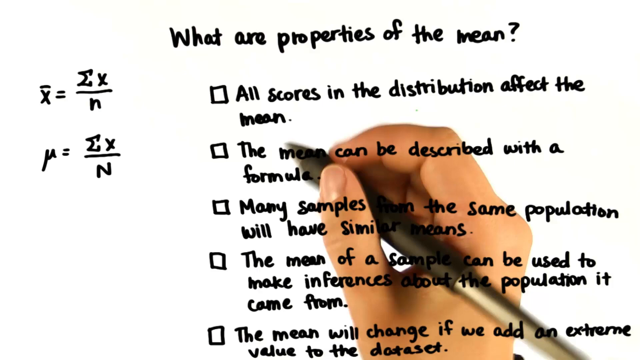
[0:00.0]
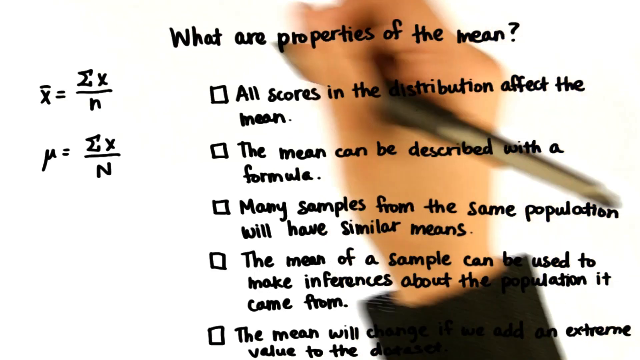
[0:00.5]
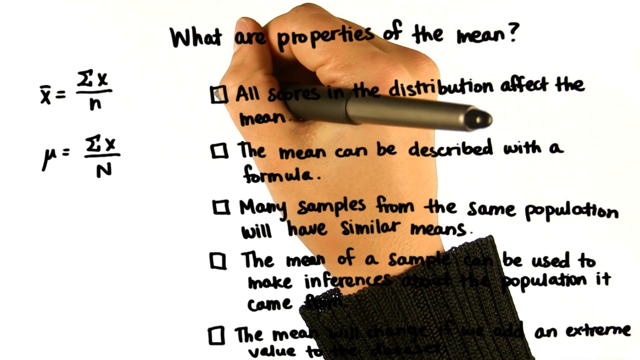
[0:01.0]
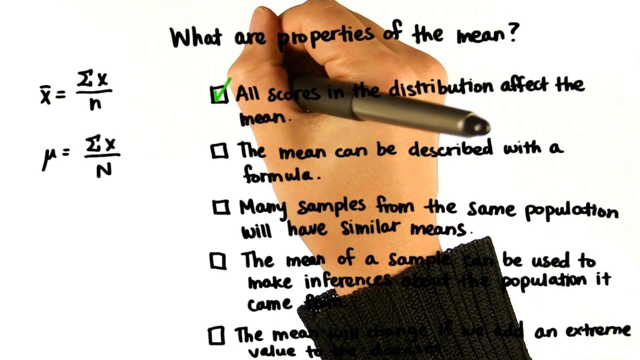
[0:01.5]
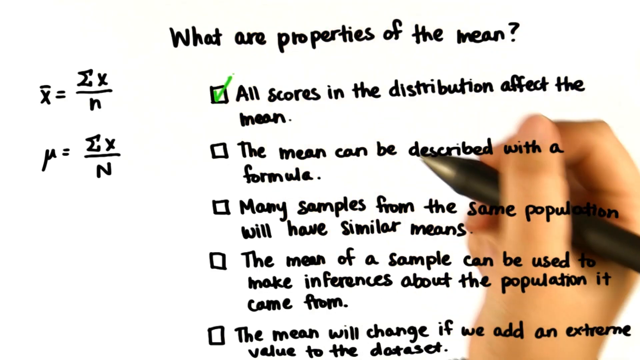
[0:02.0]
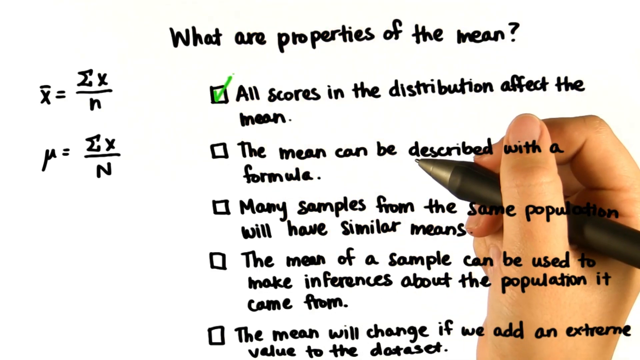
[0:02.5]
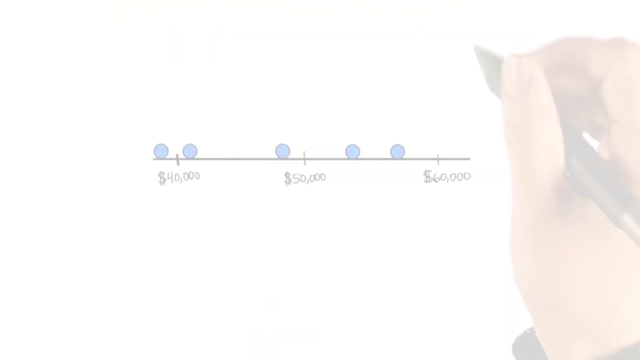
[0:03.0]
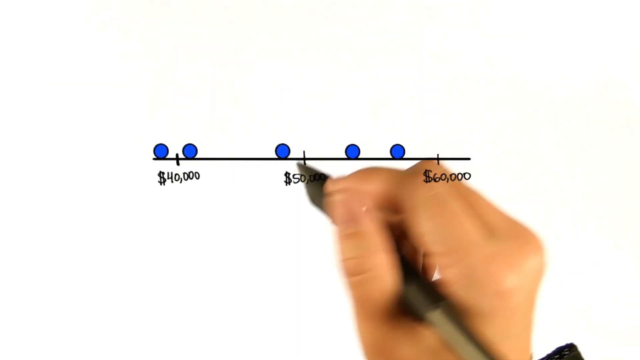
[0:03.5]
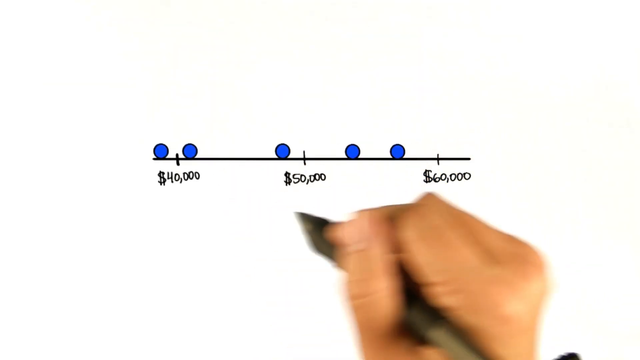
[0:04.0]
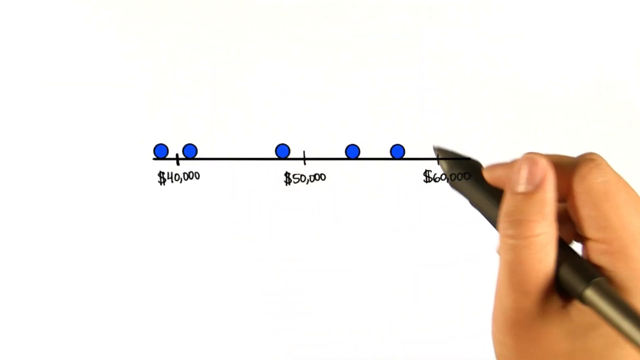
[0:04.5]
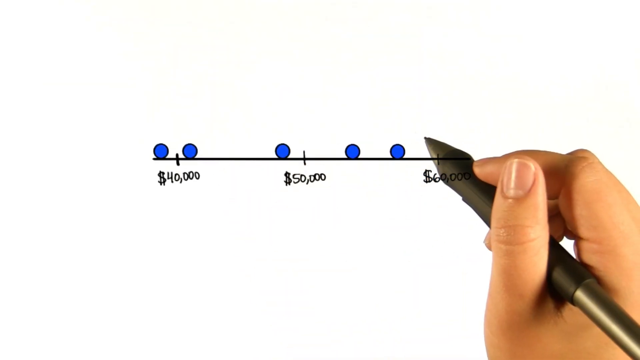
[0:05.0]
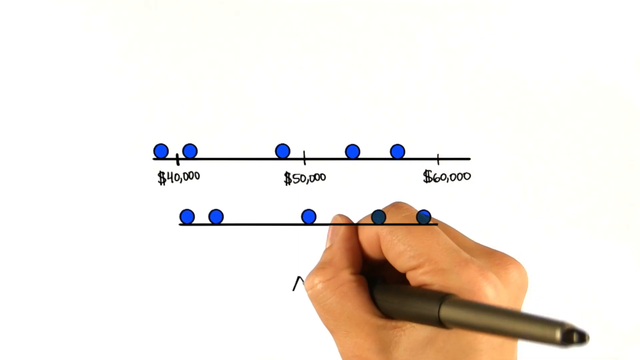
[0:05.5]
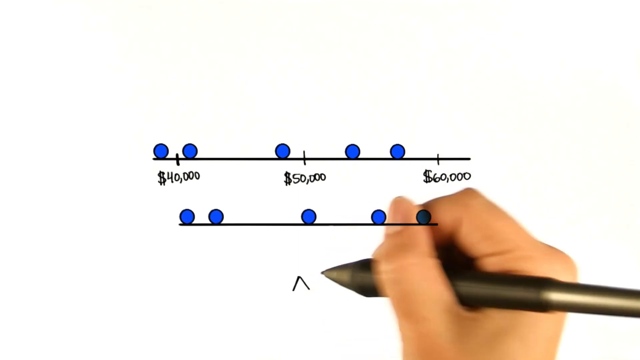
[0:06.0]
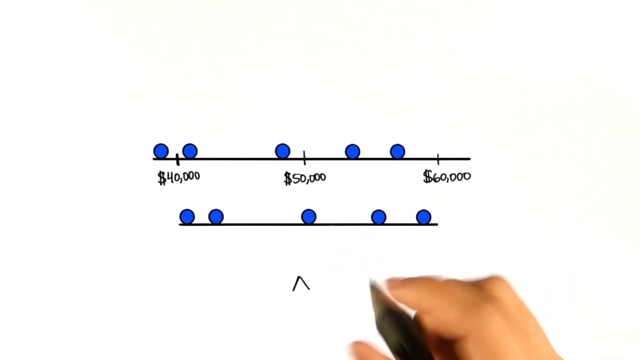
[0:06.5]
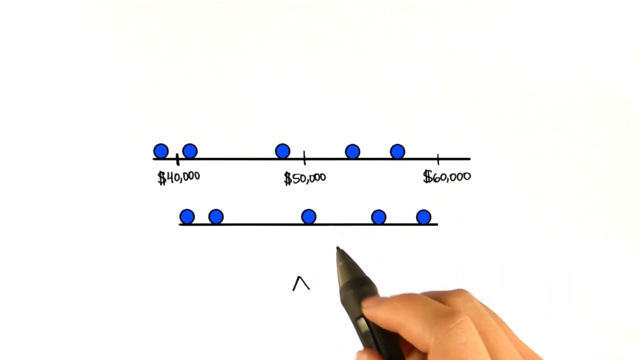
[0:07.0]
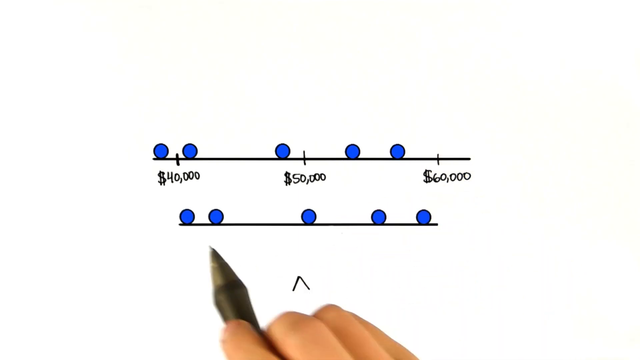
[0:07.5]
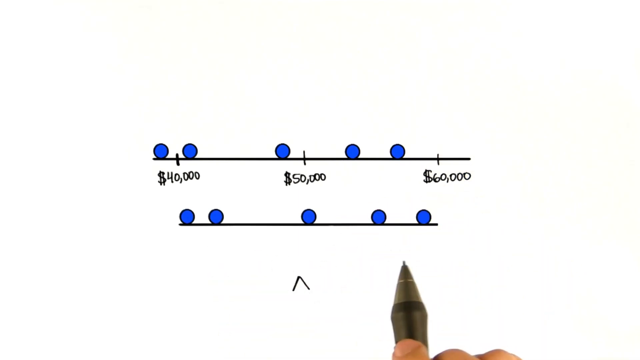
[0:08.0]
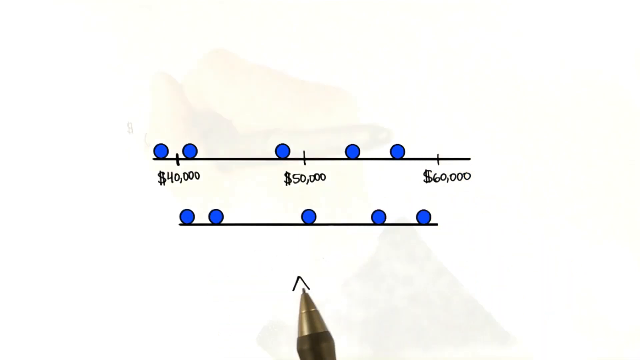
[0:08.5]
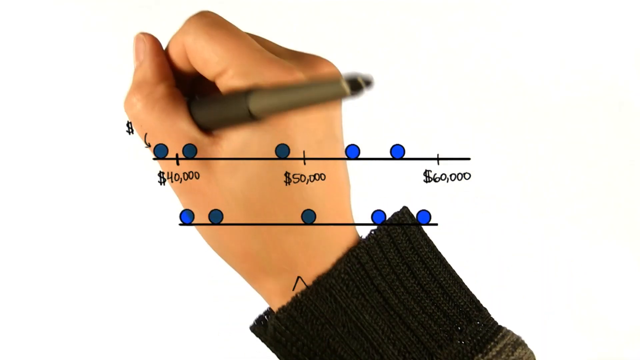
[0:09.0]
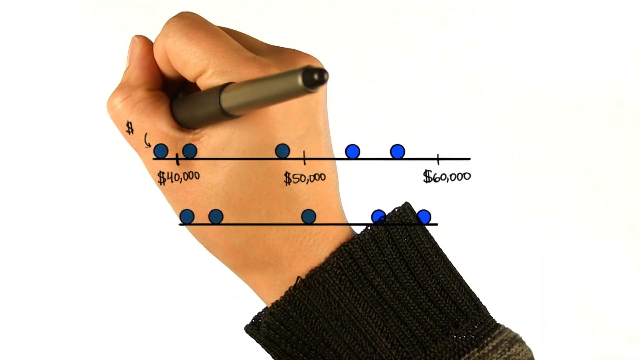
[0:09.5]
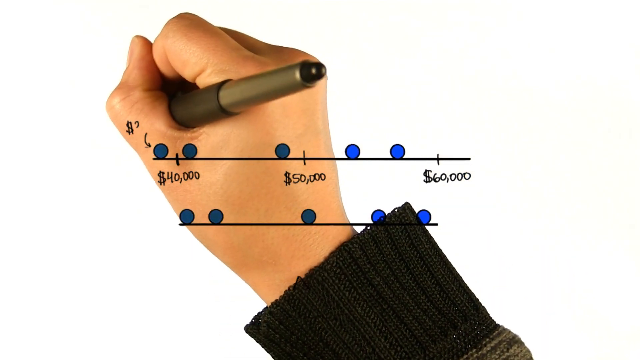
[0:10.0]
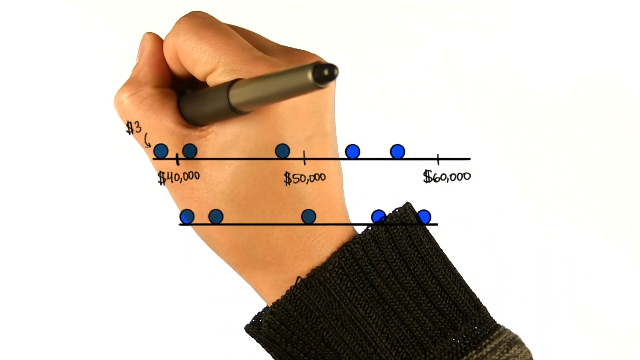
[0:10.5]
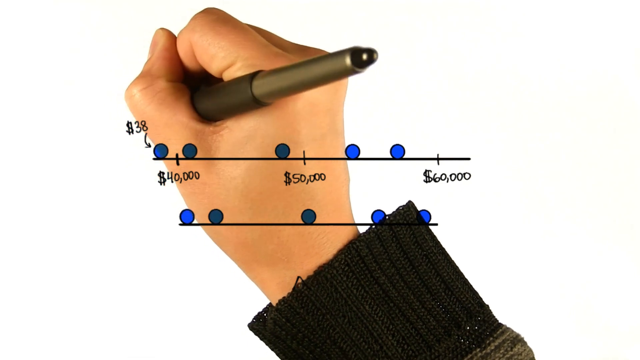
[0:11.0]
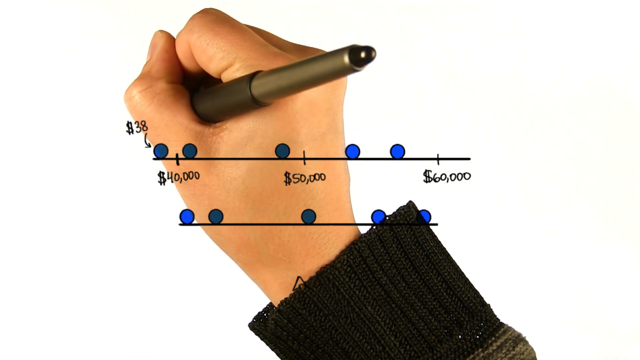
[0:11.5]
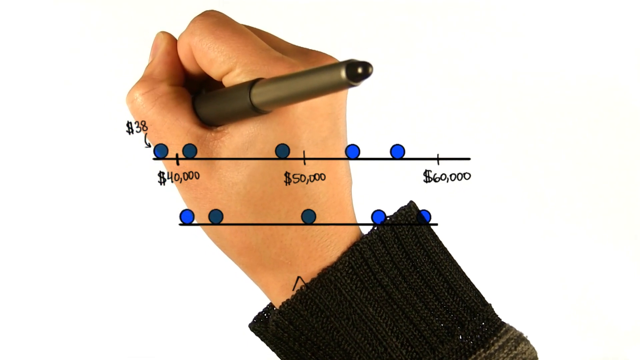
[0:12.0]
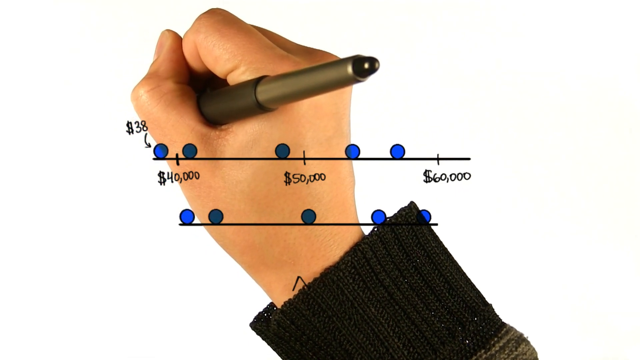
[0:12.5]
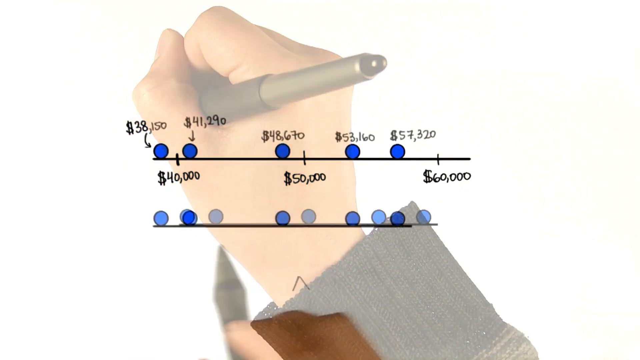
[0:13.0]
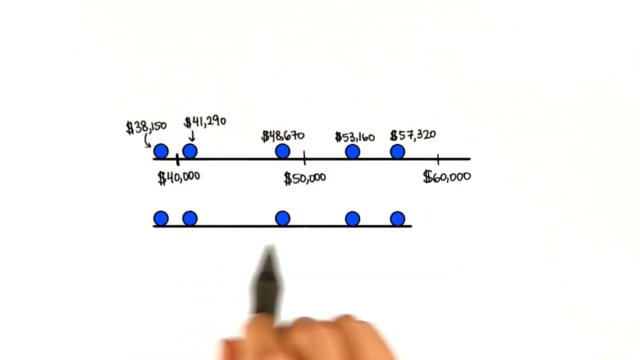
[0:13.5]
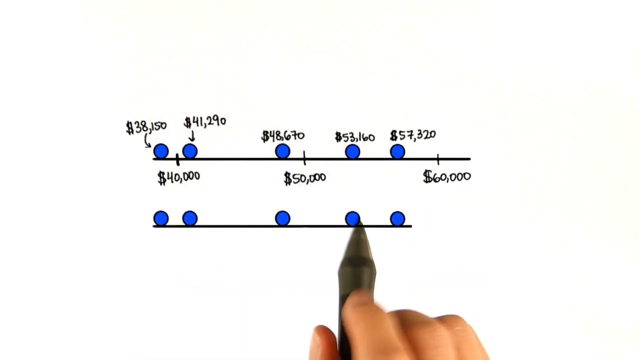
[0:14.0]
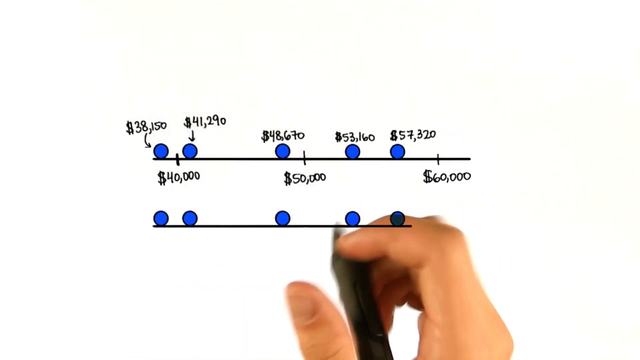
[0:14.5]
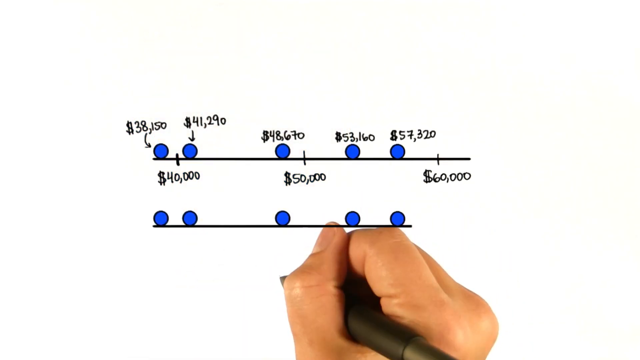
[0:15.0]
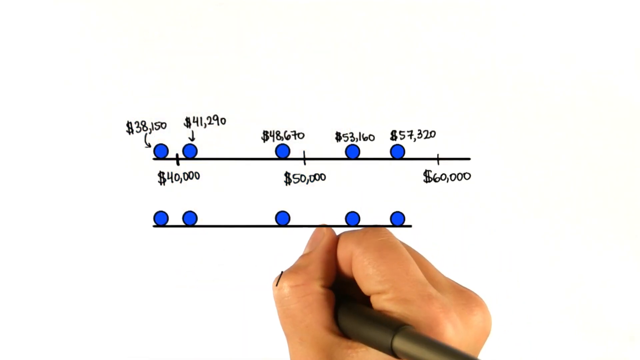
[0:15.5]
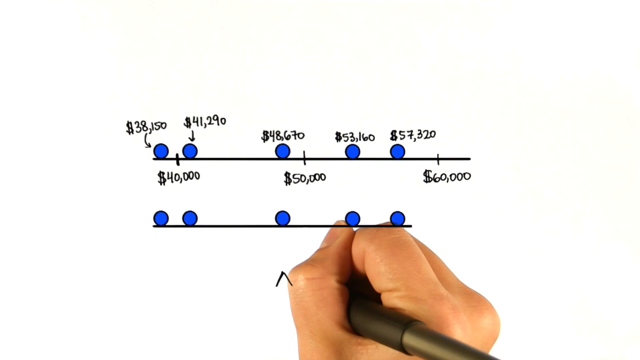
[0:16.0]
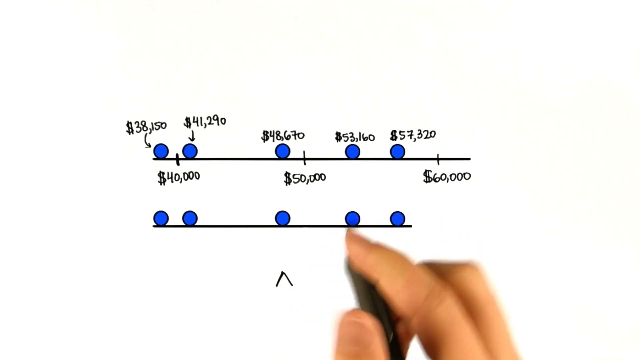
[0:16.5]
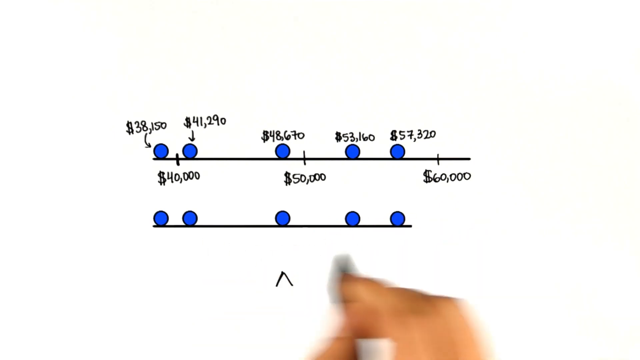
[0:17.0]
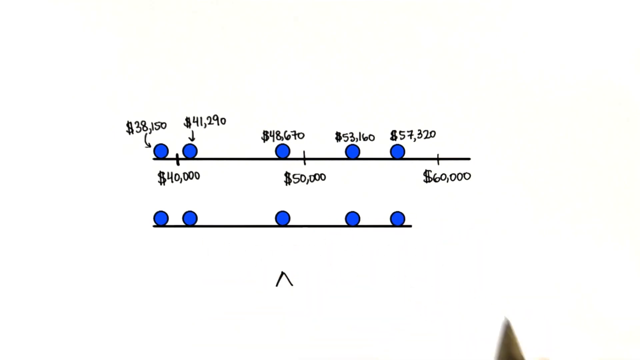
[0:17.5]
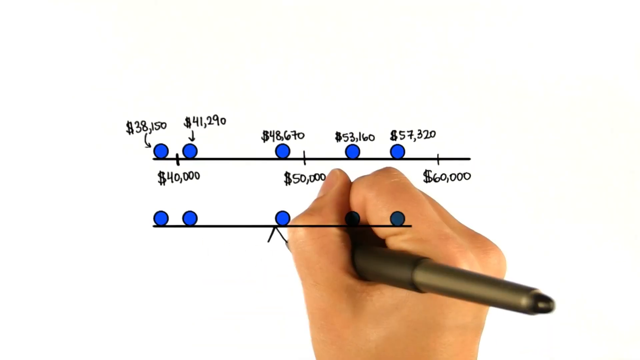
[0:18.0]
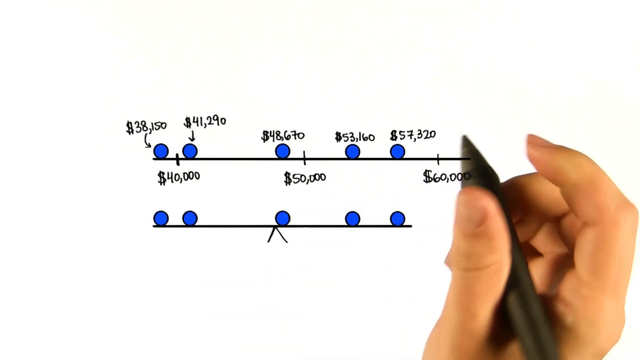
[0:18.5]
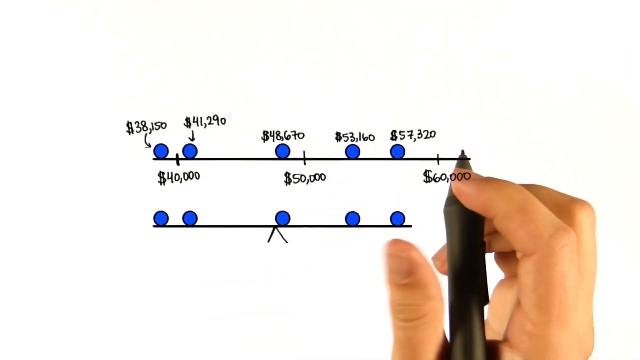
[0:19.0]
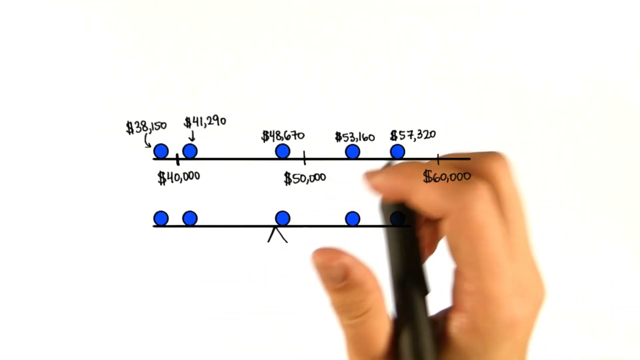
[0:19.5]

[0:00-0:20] A person holding a pen checks off items on a list titled "what are properties of the mean". The list has four points, all in text, and there are also two mathematical equations on the left-hand side. The person checks off the first point and then moves on to draw a diagram: a line with three points on it and some balls on it. It looks like some sort of equation he is trying to solve with his pen. He counts the balls on the line and starts drawing, writing and scribbling at the very top, then hesitates and writes at the bottom again, counting the blue balls and writing down more numbers along the line. The numbers along the line, between the balls, are all dollar values, while the blue balls have nothing significant attached to them.